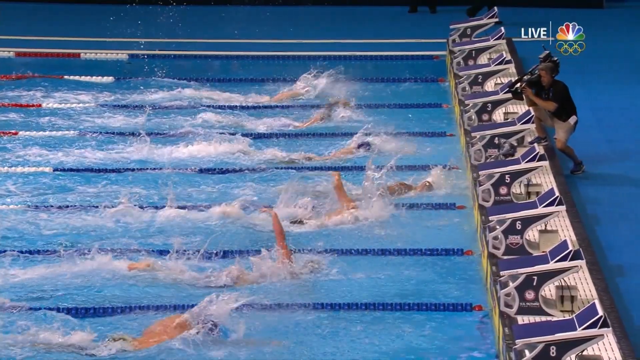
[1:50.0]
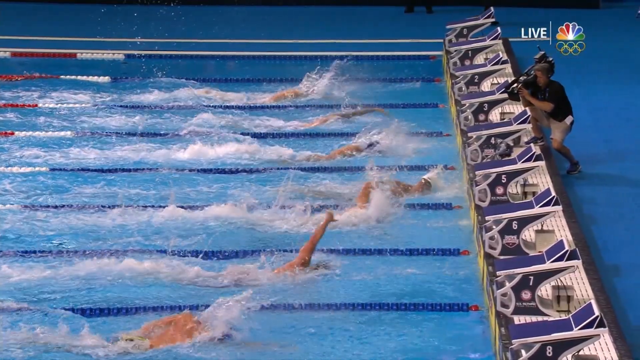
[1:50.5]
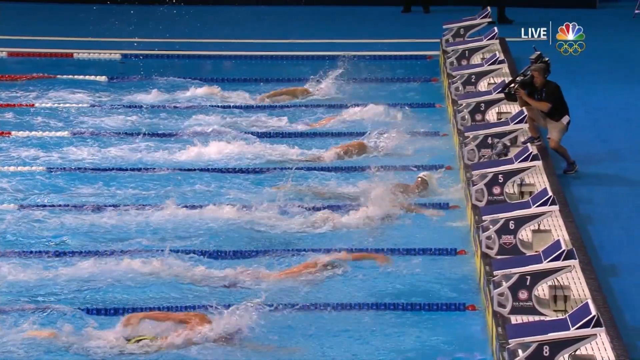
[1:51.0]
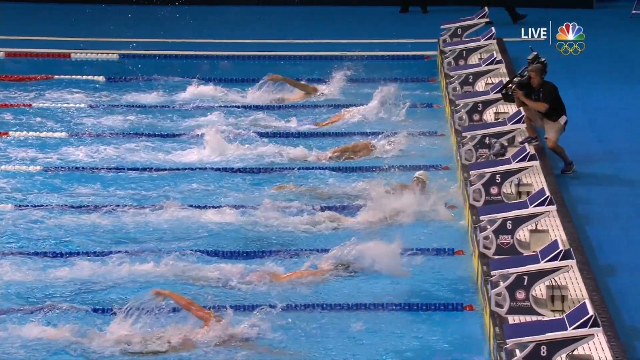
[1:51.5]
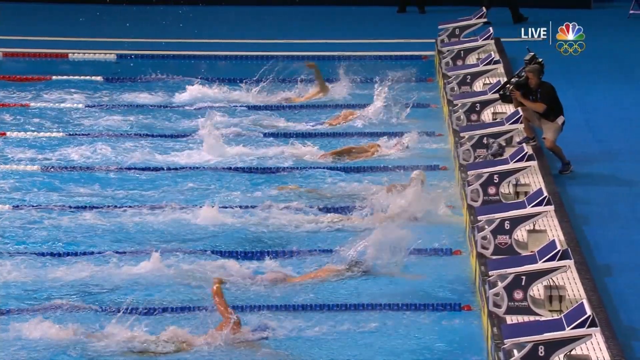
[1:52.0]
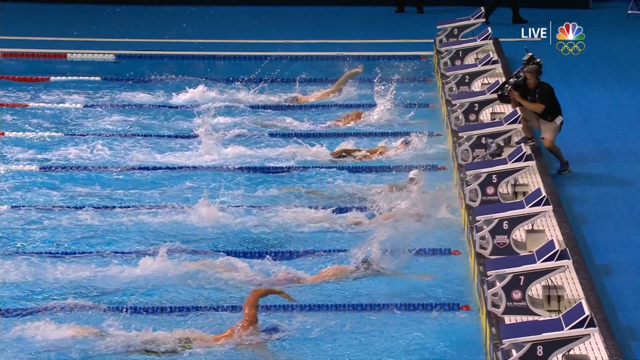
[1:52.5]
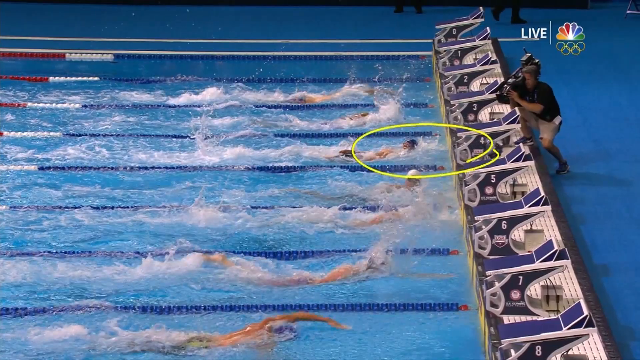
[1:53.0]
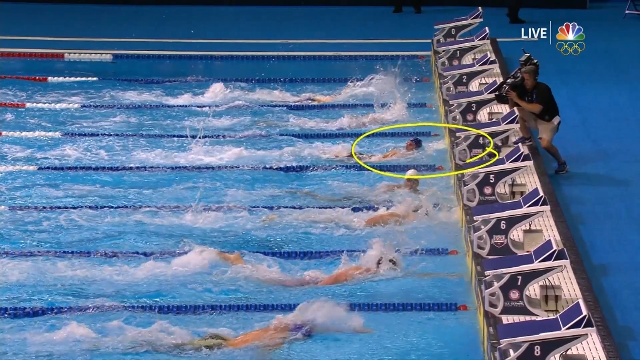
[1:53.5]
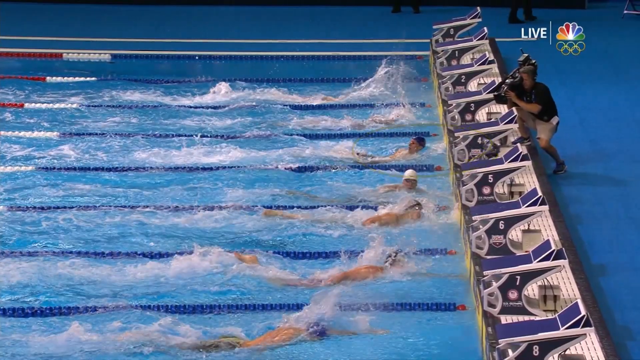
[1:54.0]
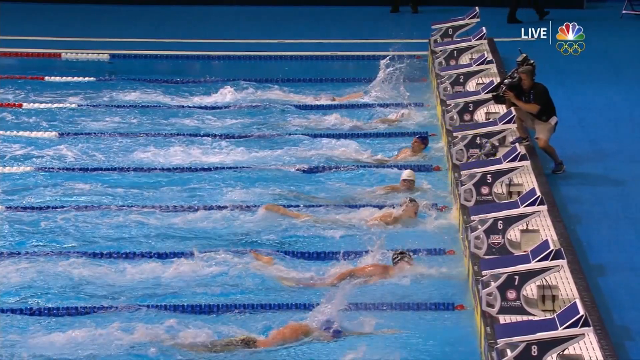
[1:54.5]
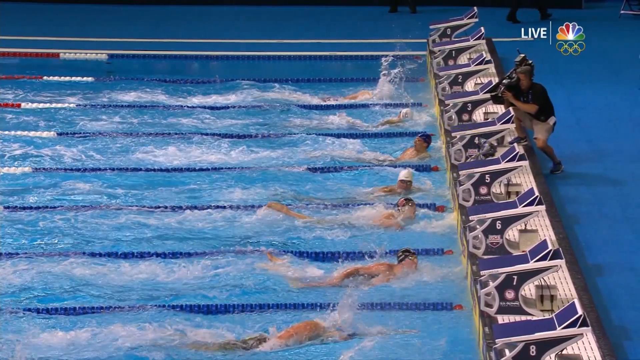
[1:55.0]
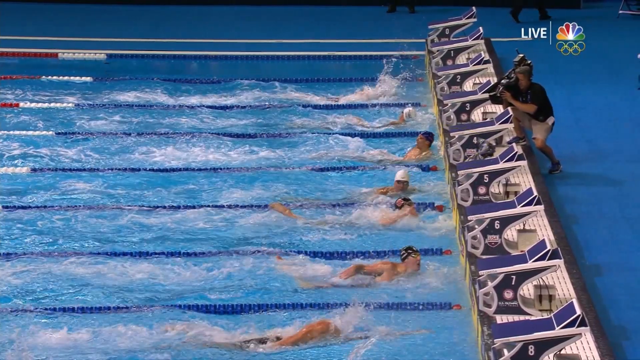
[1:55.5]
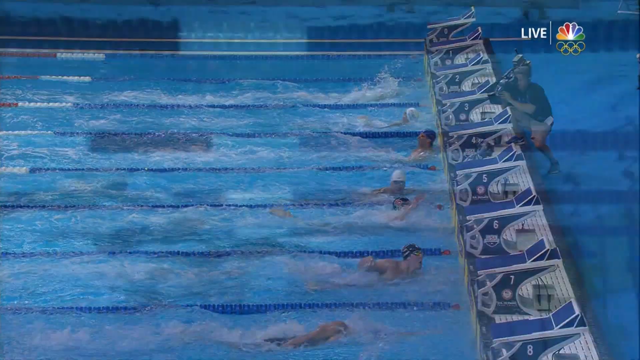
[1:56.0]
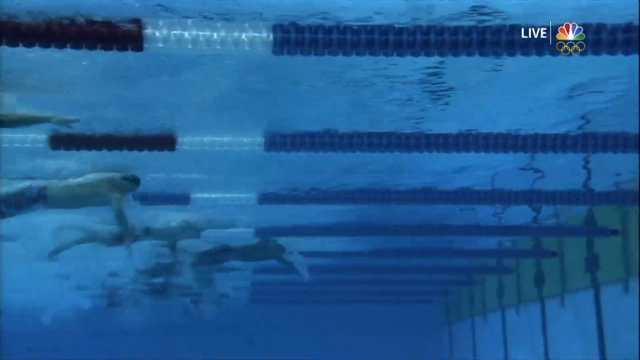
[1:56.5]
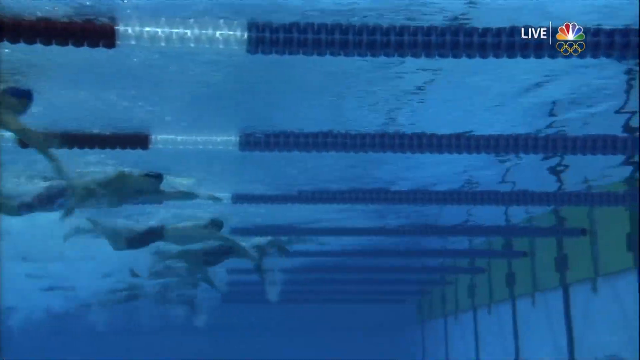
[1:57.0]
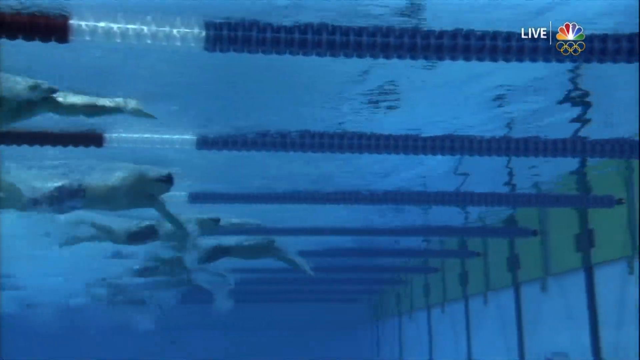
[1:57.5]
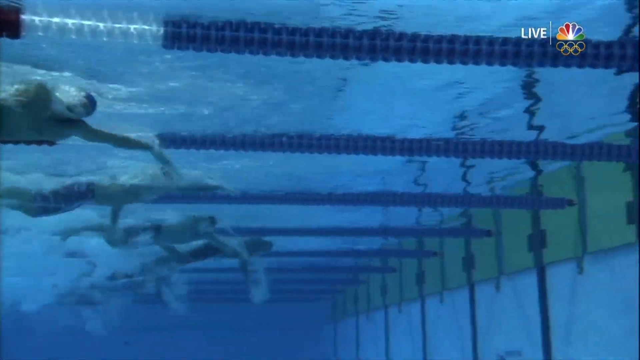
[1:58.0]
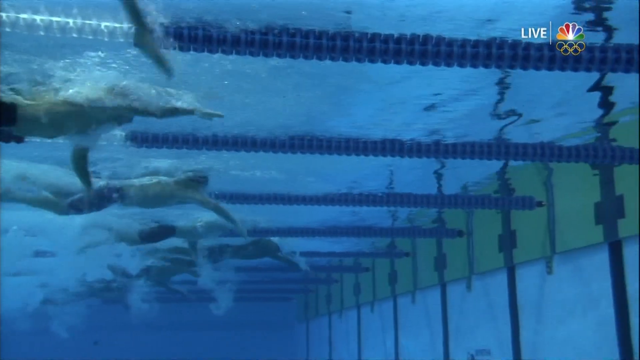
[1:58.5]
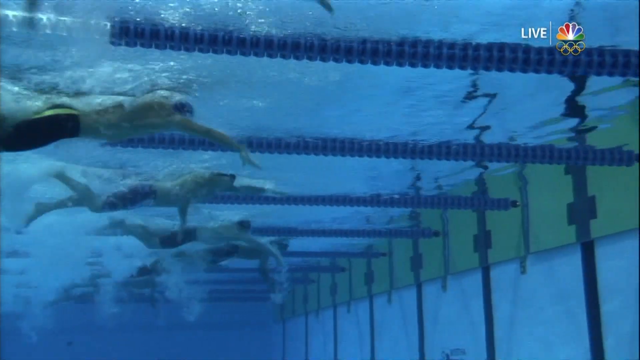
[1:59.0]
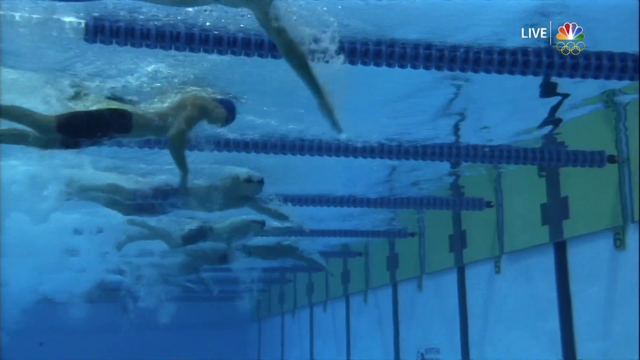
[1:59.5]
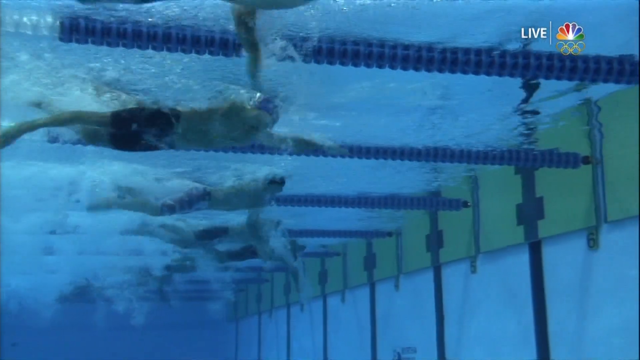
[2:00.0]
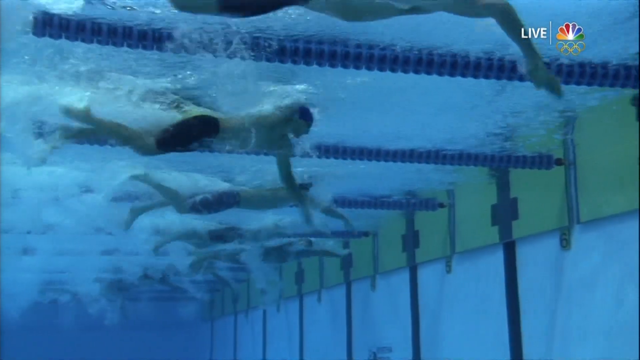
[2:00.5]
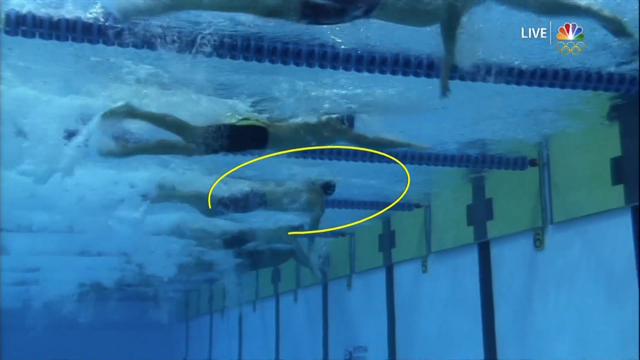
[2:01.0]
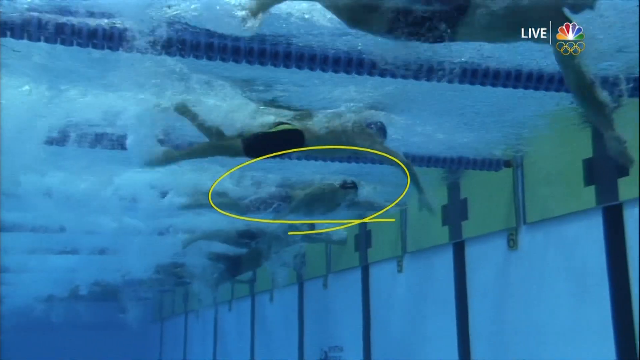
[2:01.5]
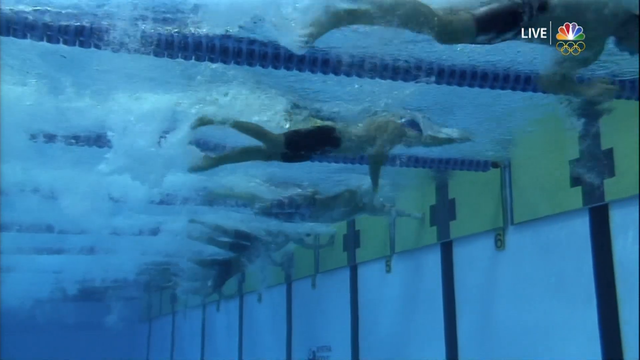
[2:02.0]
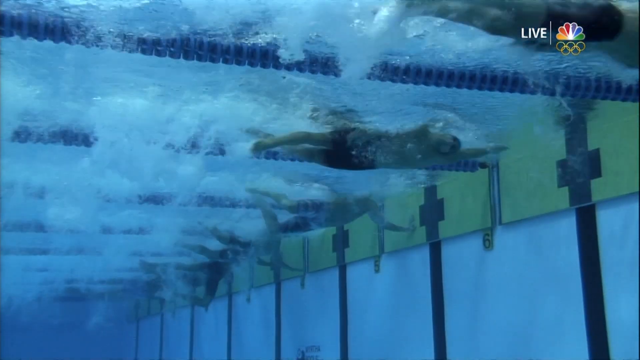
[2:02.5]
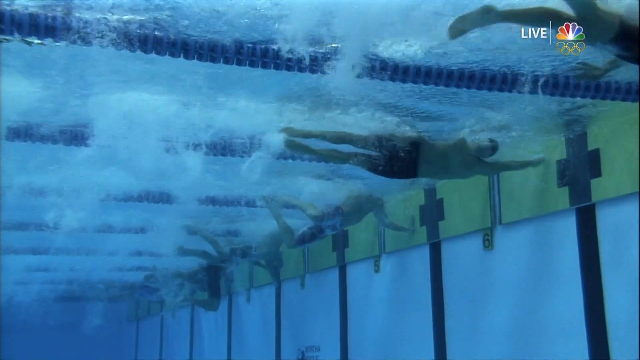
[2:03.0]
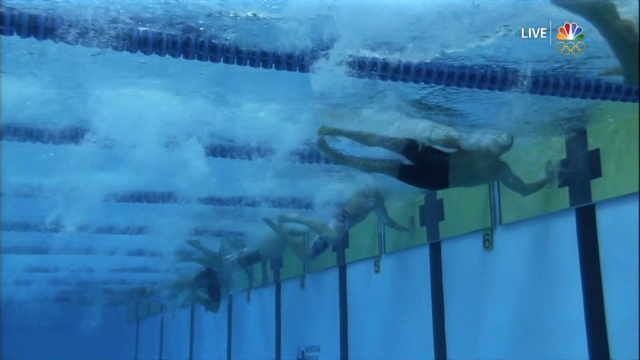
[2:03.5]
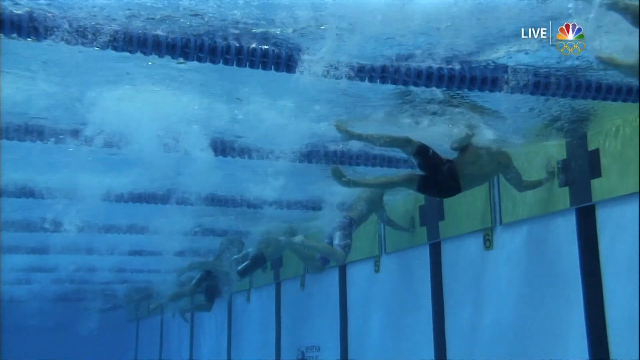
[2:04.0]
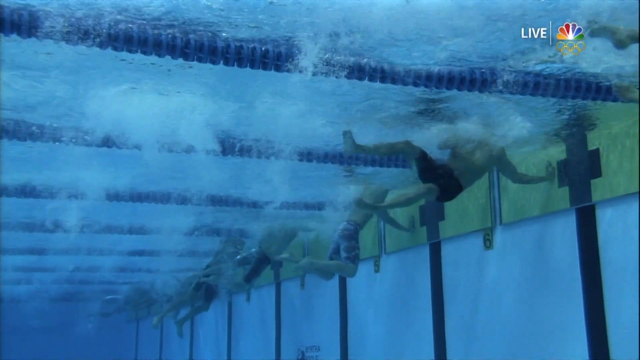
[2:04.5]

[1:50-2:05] As the swimmer touches the end wall of the pool, a yellow oval is digitally drawn above his head to indicate that he is the winner. The cameraman squats close by, with his leg supported on the side of the pool, to get a close view of the winner, who wears a white swim cap. All of this is in slow motion. A slow-motion view then shows the swimmers beneath the water, and the winner touches the wall first and is circled with the yellow digital oval.